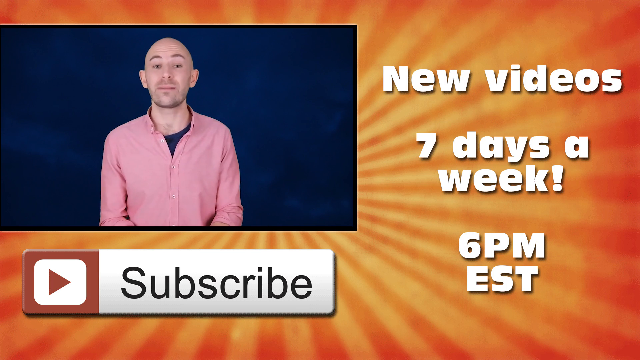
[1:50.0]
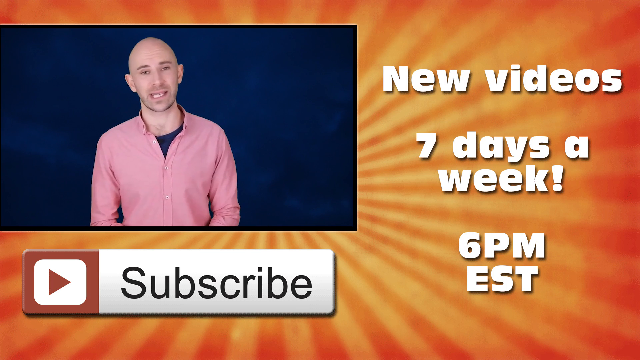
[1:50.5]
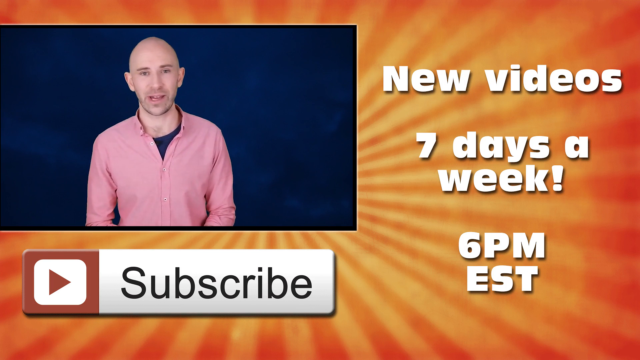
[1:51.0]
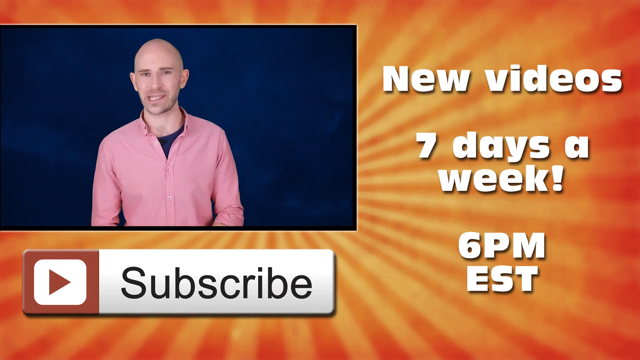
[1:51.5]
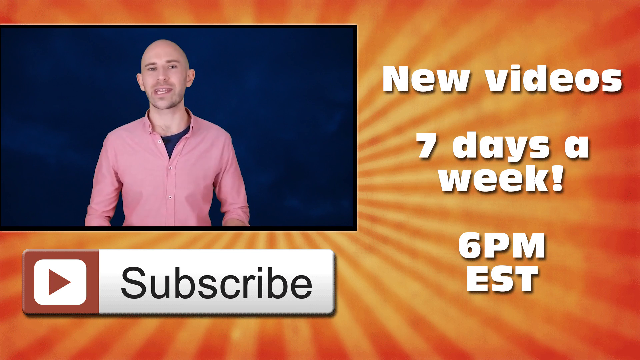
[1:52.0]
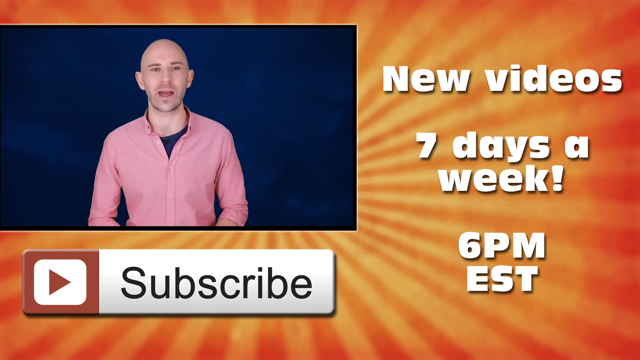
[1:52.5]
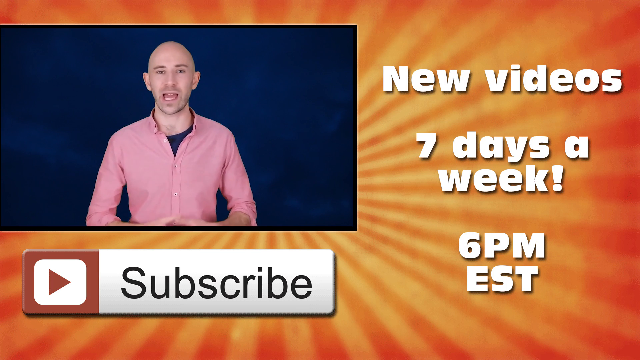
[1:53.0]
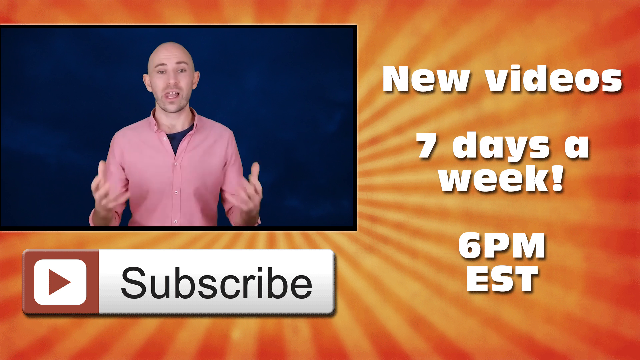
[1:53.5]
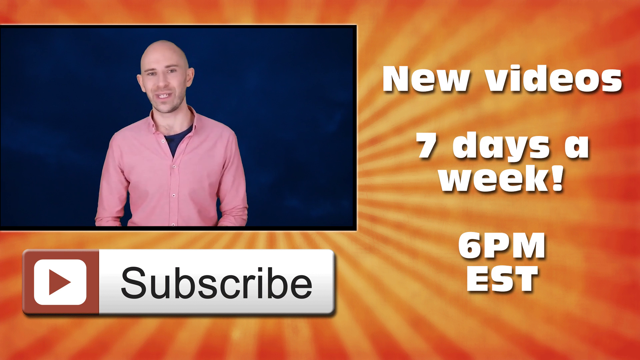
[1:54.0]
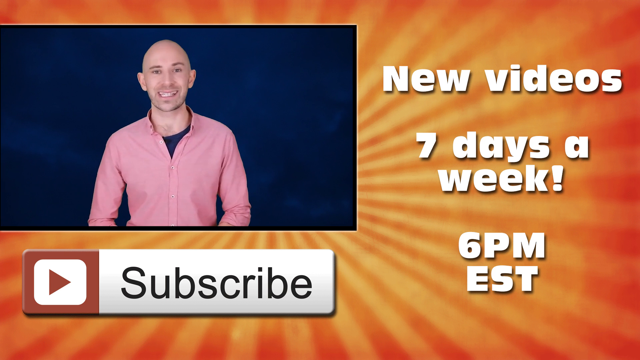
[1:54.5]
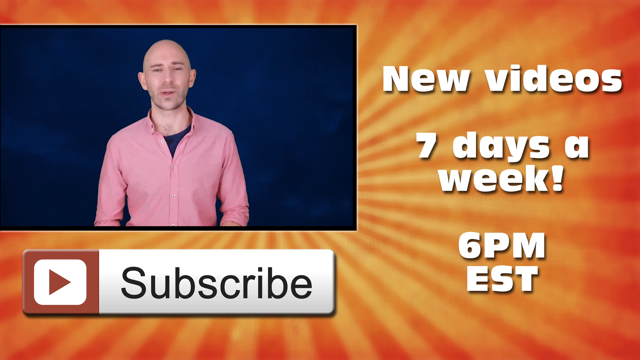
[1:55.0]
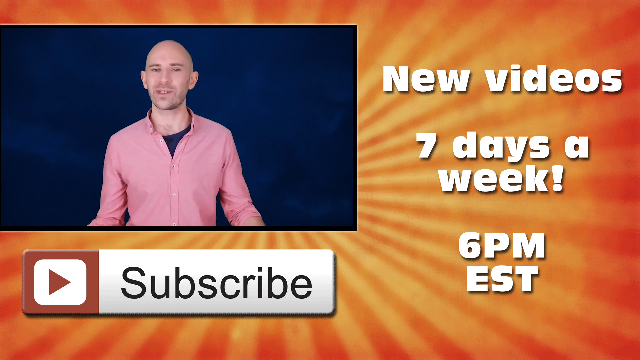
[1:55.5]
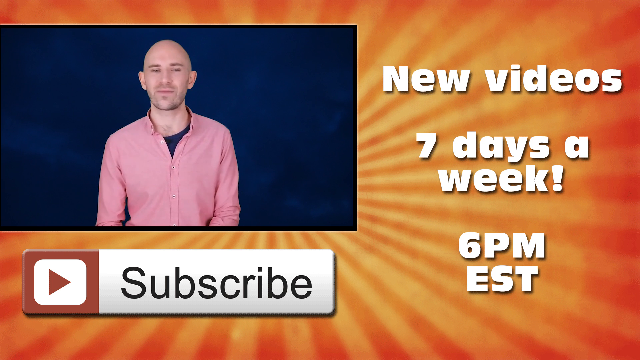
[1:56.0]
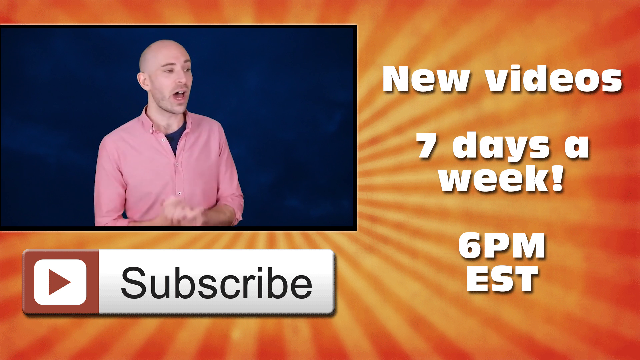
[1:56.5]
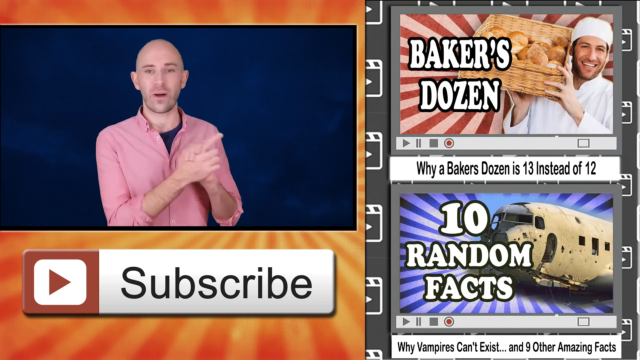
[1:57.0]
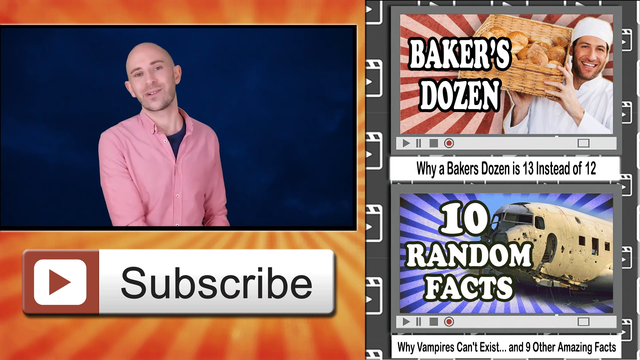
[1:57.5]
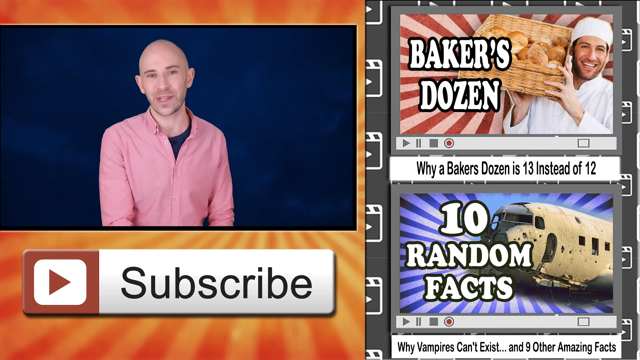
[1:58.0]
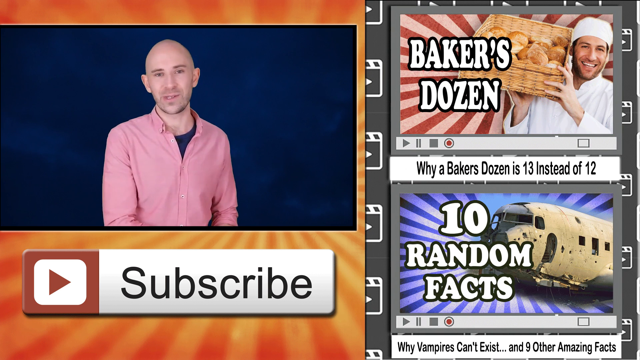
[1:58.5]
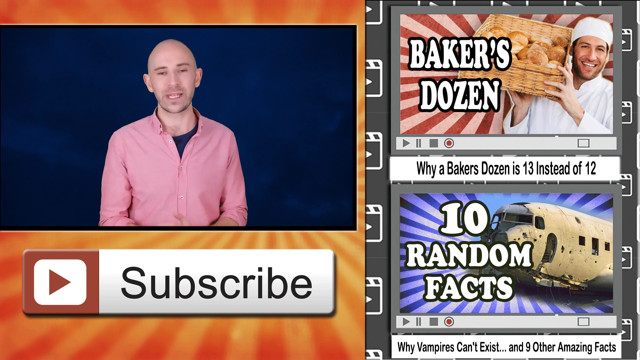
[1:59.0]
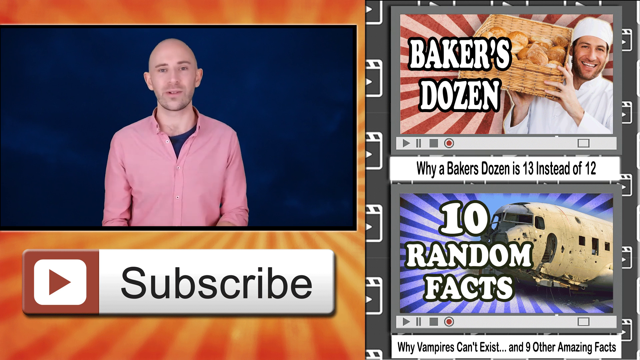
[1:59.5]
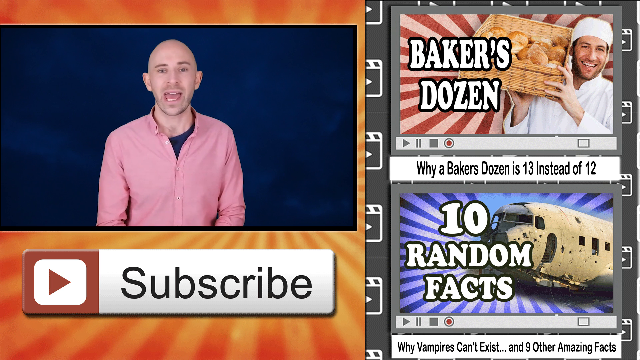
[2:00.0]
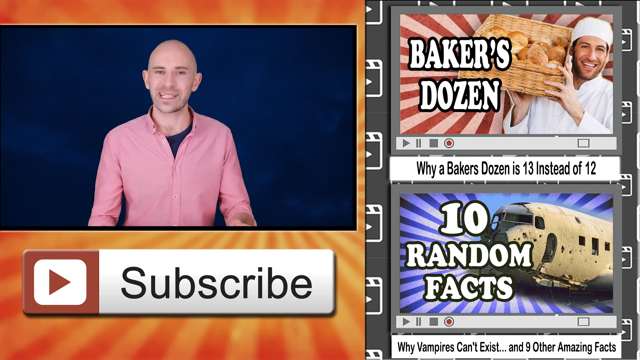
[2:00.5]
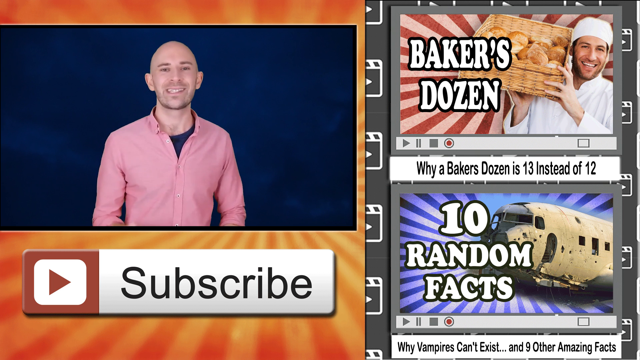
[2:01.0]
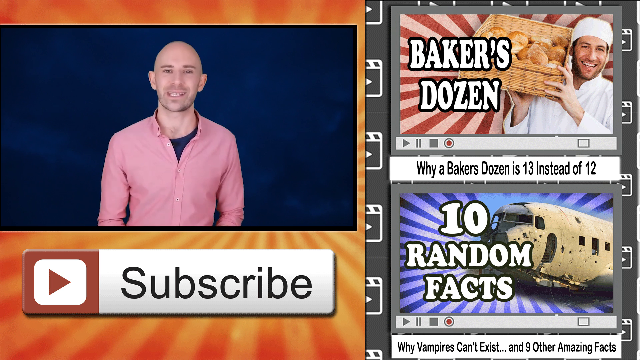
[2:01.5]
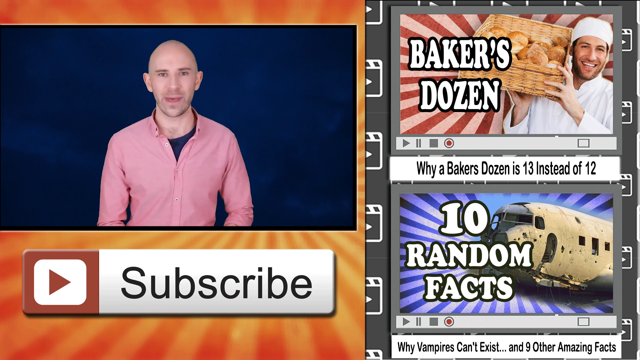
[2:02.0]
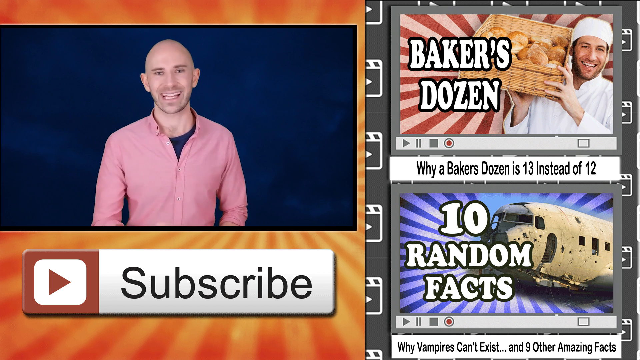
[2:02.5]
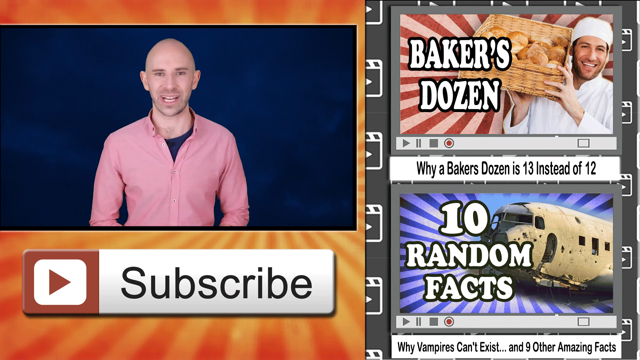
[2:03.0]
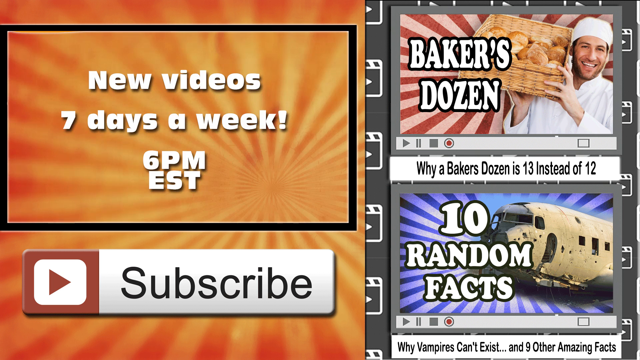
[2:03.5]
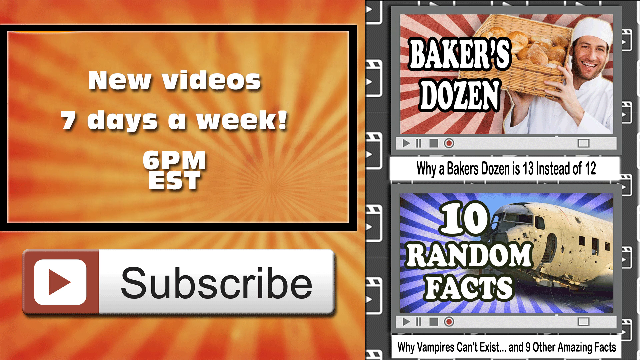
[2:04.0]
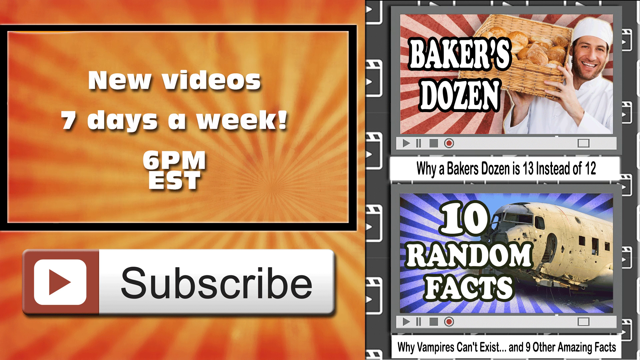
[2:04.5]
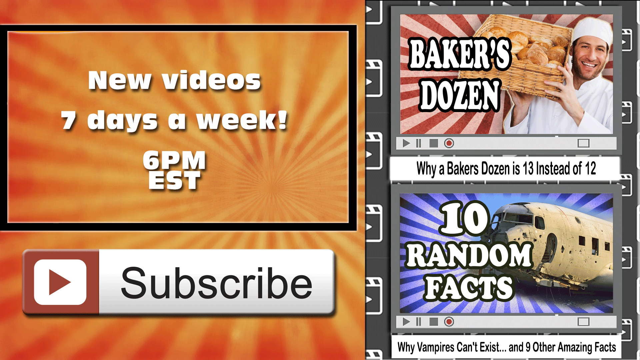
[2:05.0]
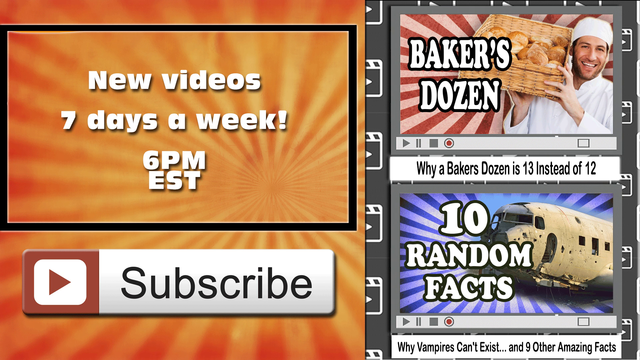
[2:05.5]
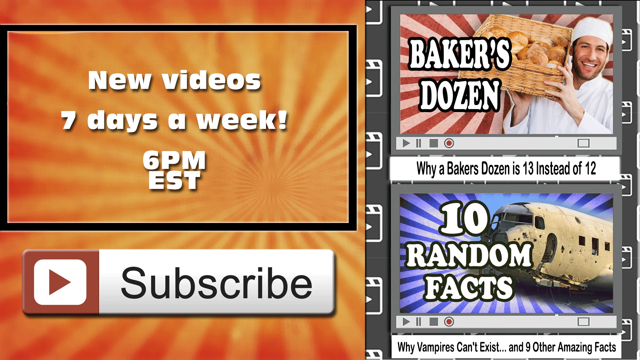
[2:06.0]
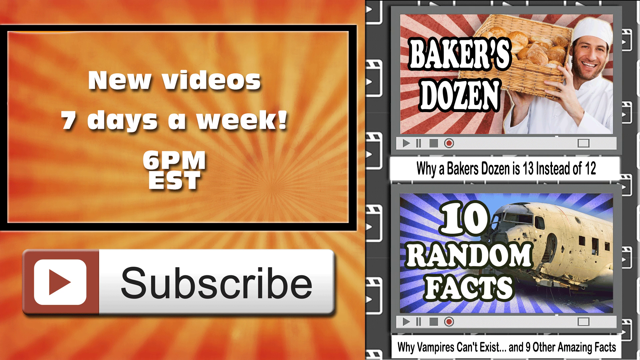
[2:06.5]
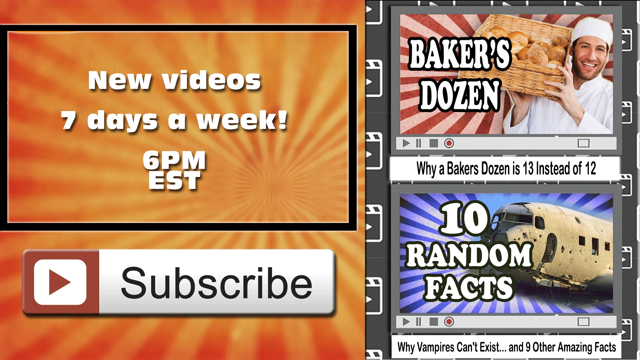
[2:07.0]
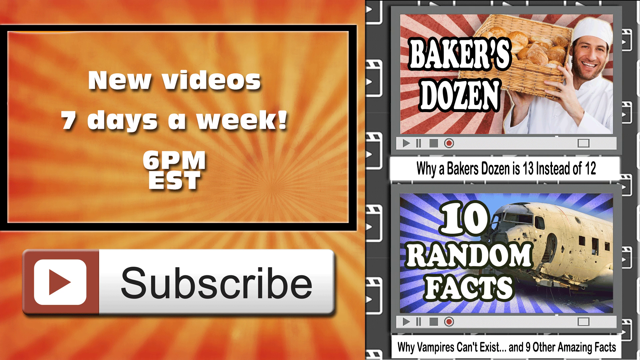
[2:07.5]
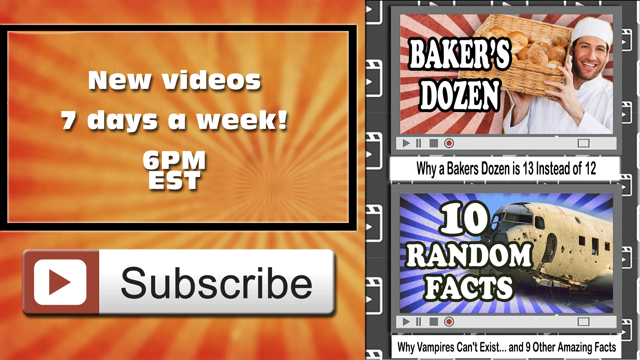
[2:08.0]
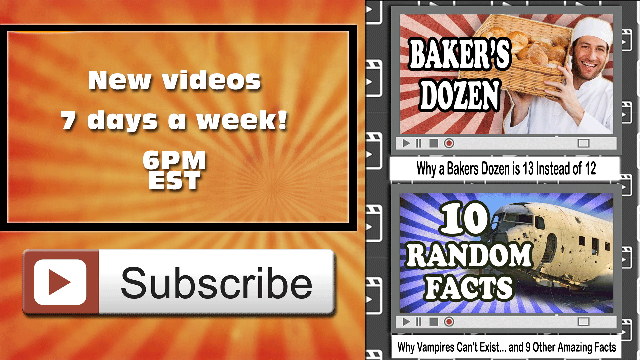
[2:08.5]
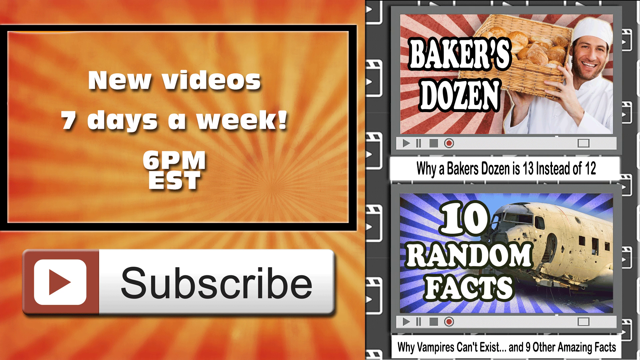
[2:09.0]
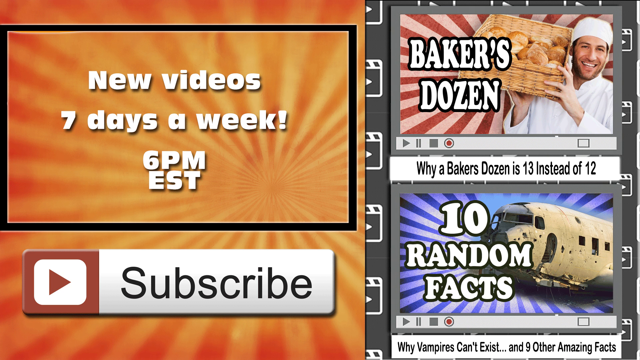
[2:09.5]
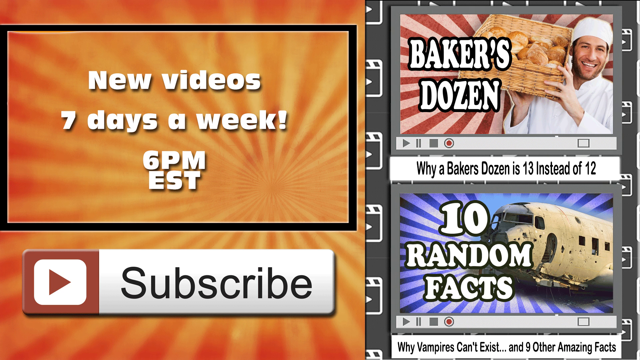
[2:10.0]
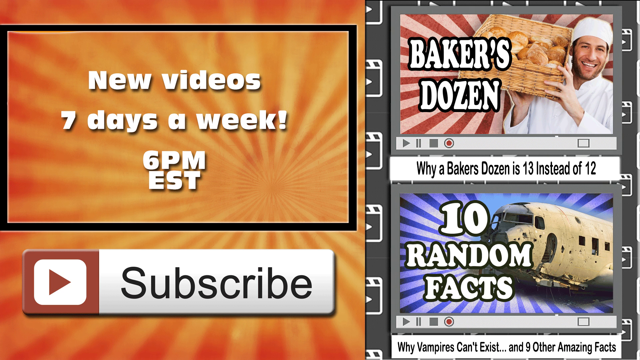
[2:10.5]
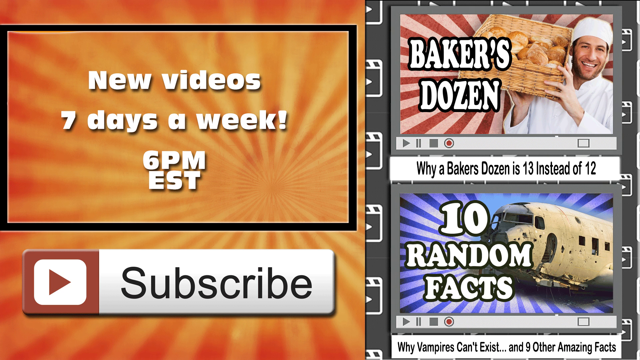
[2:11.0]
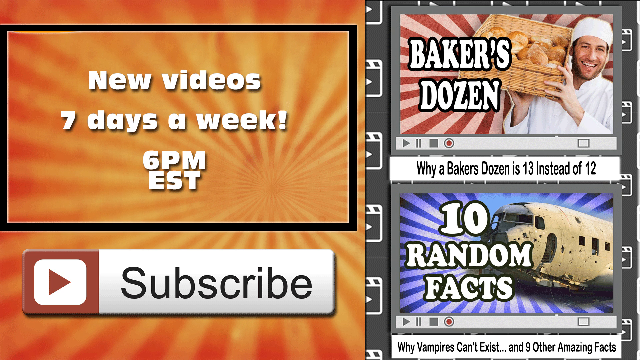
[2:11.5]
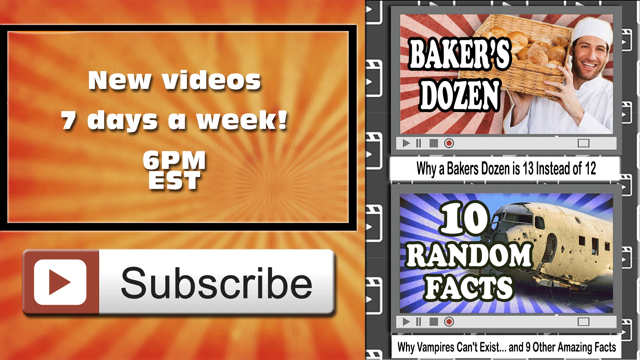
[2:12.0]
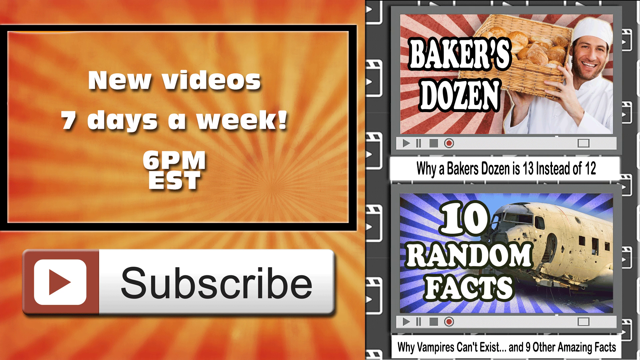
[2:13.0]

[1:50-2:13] The bald-headed man in a pink shirt with a black t-shirt underneath talks within a frame. On the right-hand side of the screen, text reads "new videos", "seven days a week" and "6pm EST", all in white. Below is a YouTube banner with "subscribe" written in black on a white background. The background of the screen has sun-like ray lines in a mixture of orange and red. The man gesticulates as his mouth moves and points to the side, and the video shows an image of a chef holding a basket of bakery with the words "baker's dozen" written. The chef wears a white chef uniform and a chef's hat. Below the chef, text reads "why a baker's dozen instead of" in blue on a white background. Below that is a picture of an airplane with "10 random facts" written in white. The bald-headed man continues to gesticulate as his lips move.